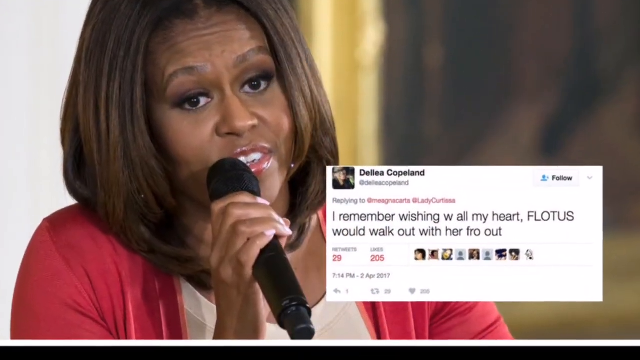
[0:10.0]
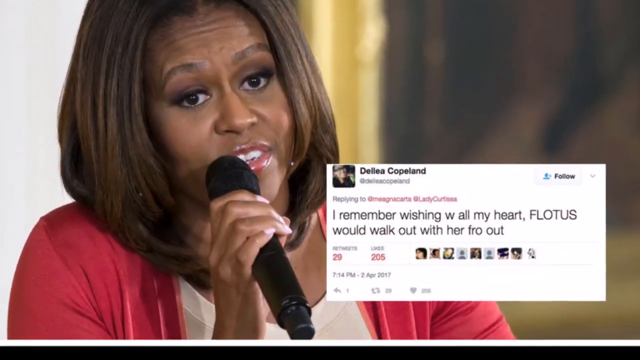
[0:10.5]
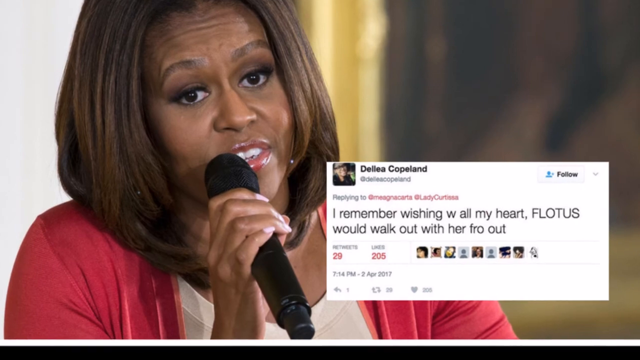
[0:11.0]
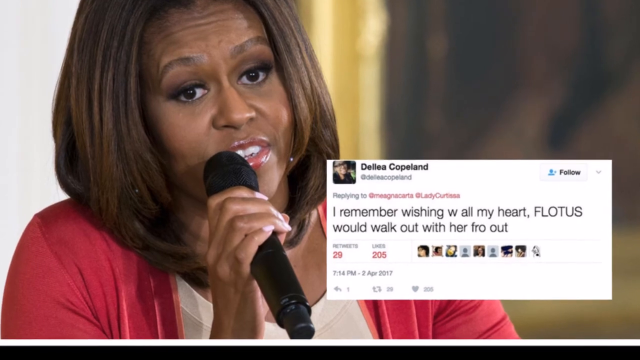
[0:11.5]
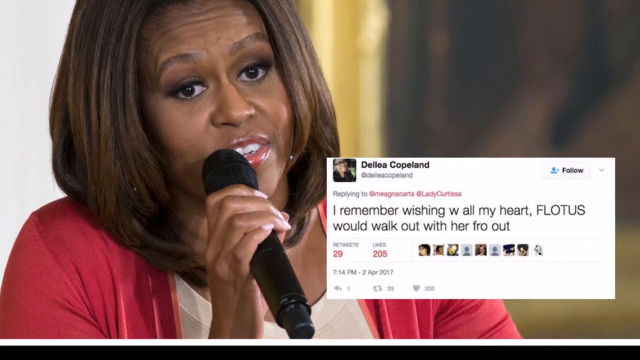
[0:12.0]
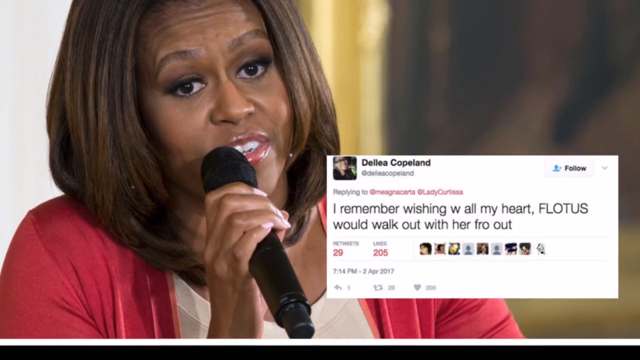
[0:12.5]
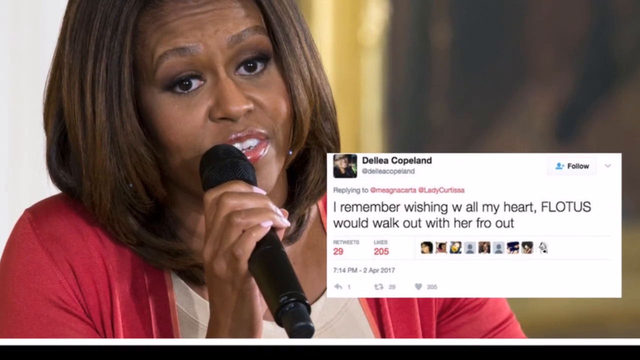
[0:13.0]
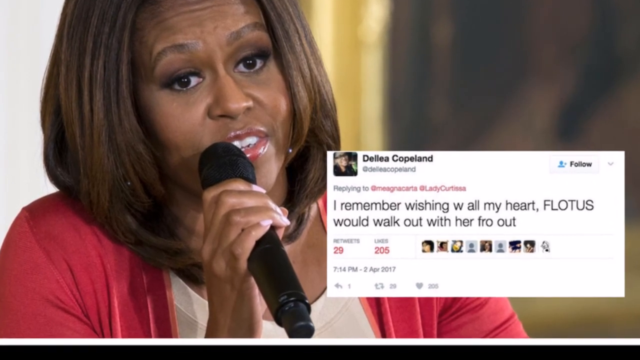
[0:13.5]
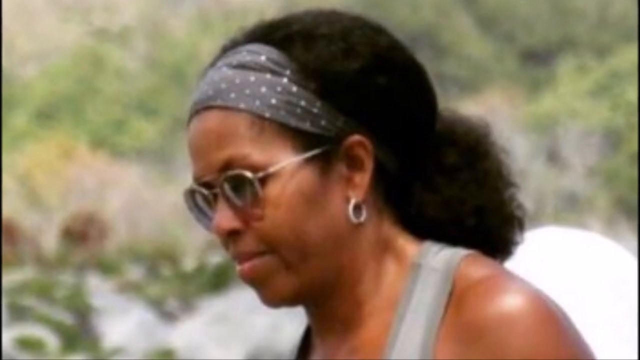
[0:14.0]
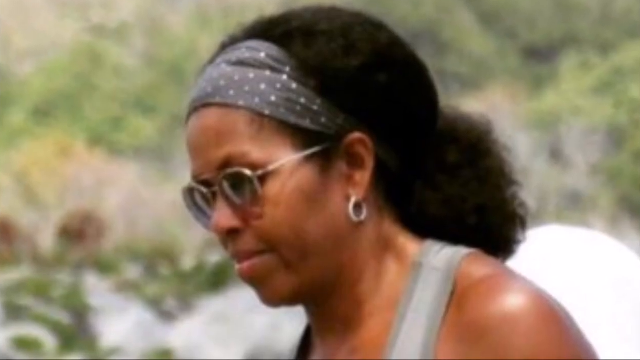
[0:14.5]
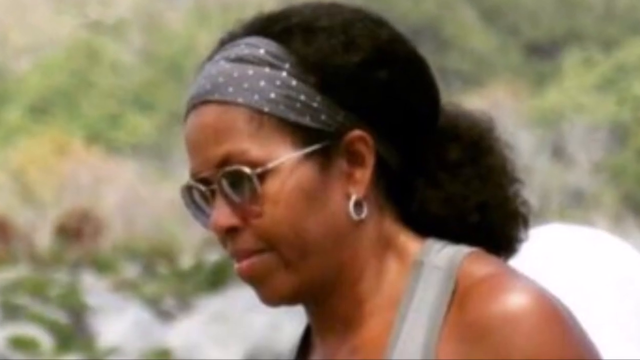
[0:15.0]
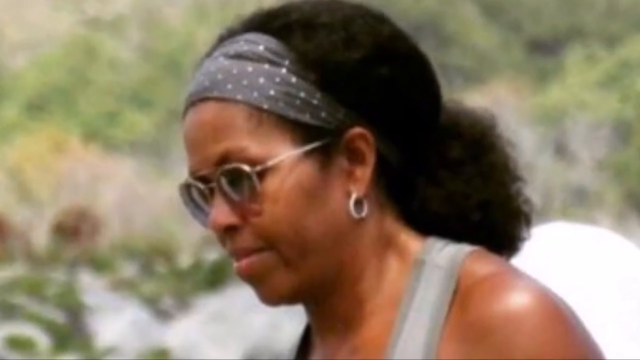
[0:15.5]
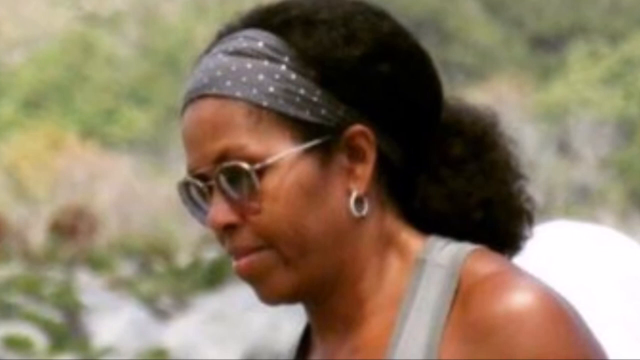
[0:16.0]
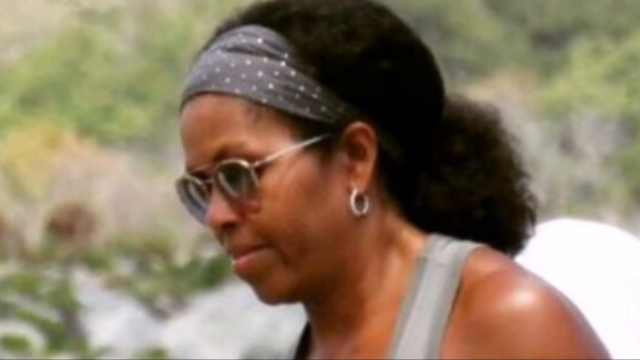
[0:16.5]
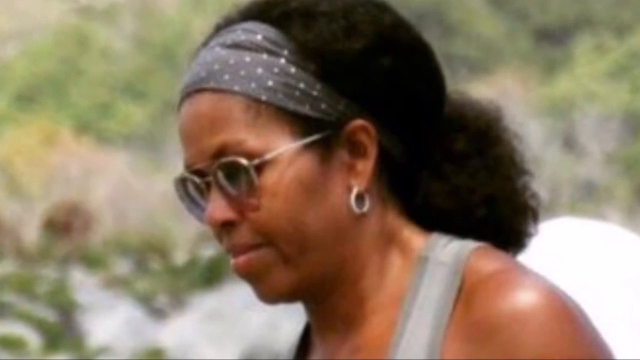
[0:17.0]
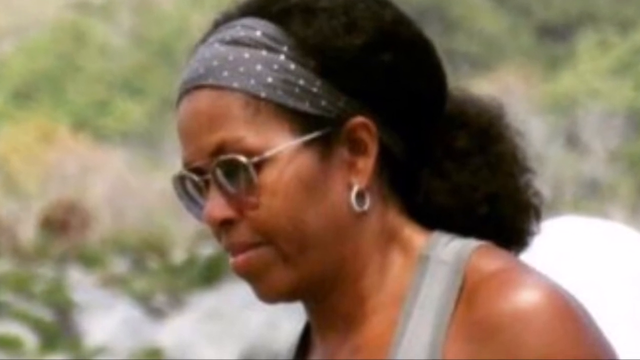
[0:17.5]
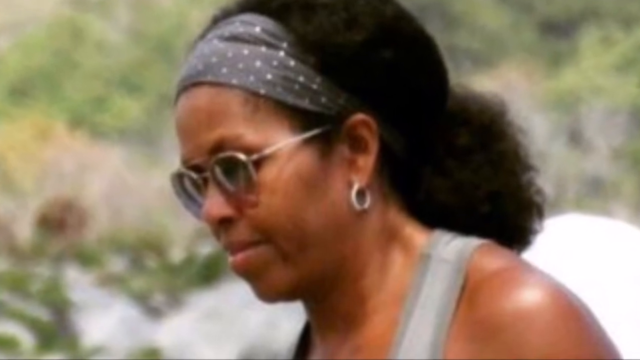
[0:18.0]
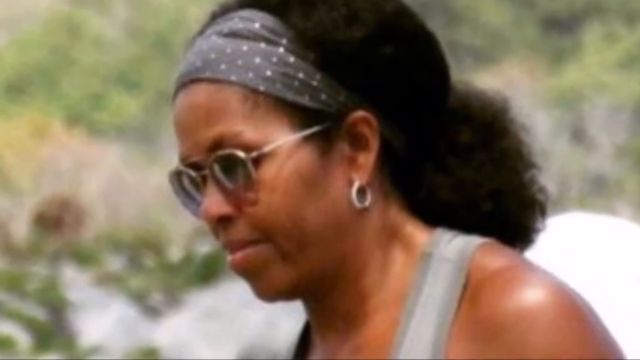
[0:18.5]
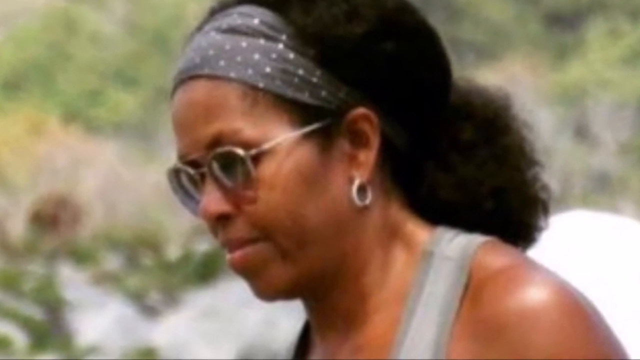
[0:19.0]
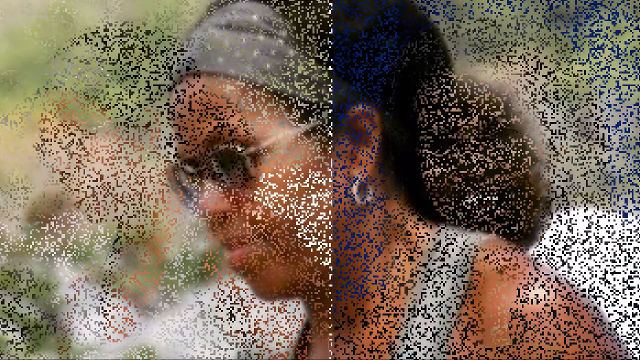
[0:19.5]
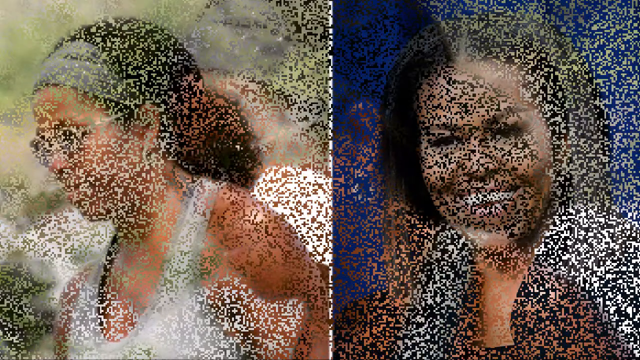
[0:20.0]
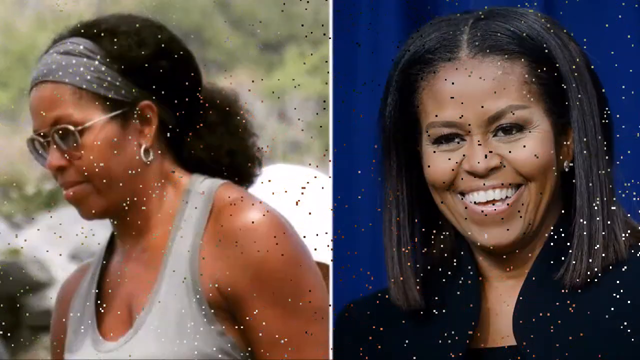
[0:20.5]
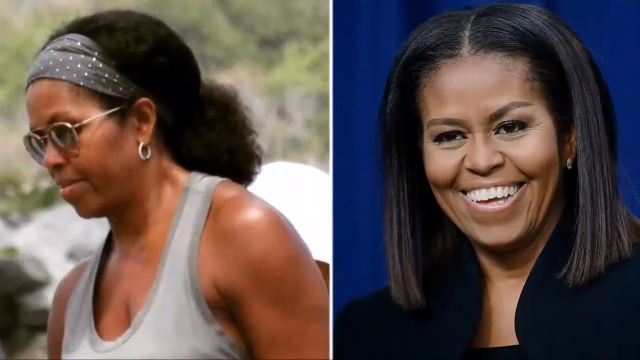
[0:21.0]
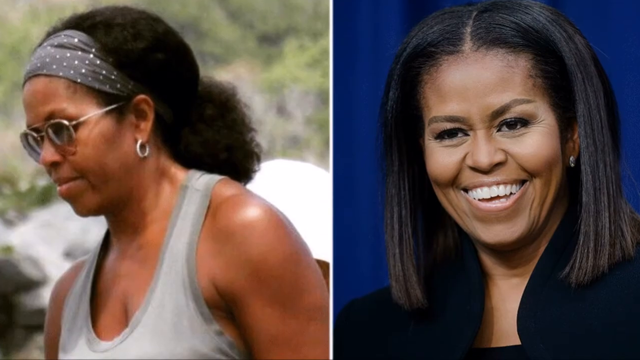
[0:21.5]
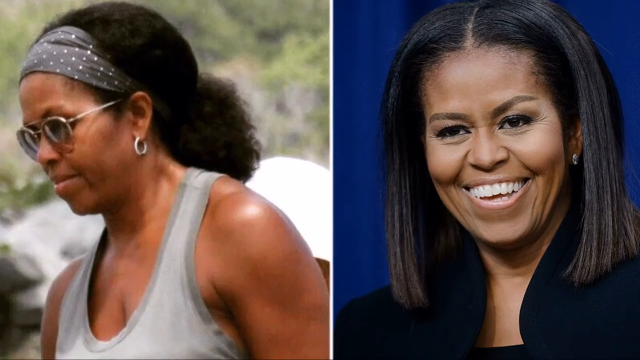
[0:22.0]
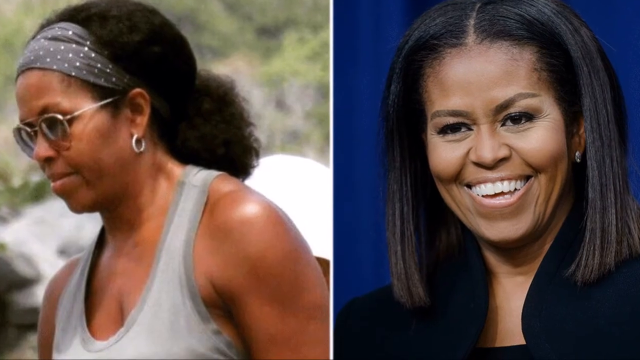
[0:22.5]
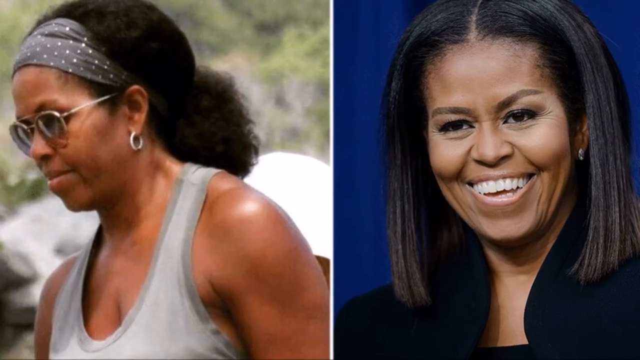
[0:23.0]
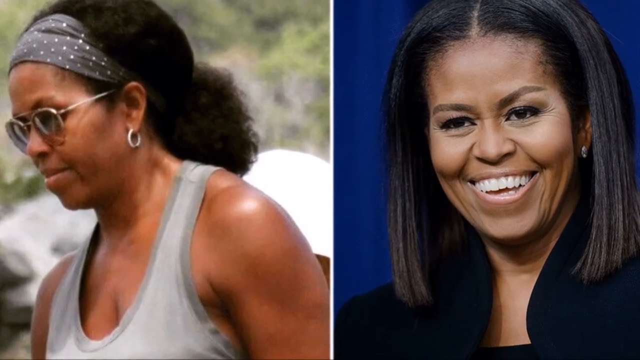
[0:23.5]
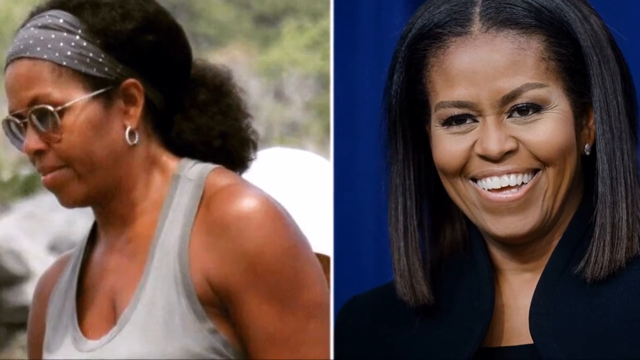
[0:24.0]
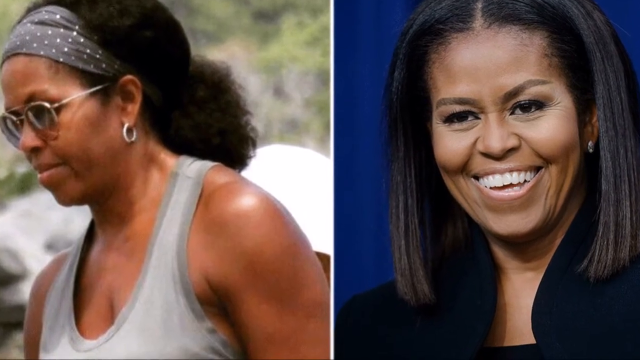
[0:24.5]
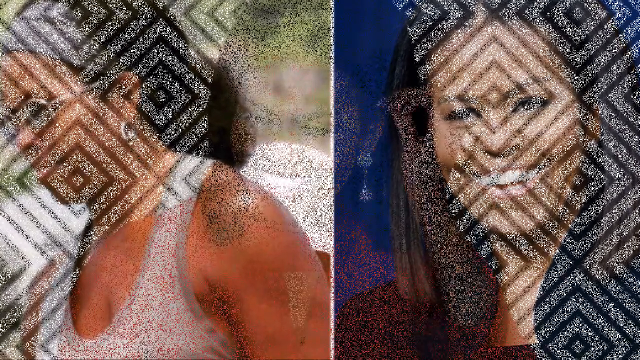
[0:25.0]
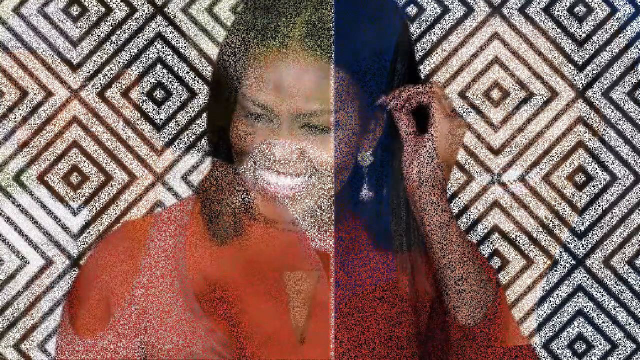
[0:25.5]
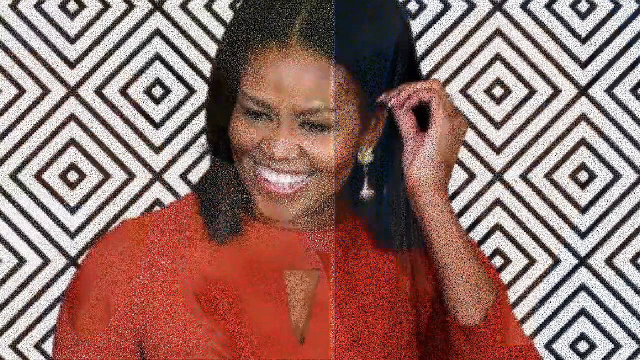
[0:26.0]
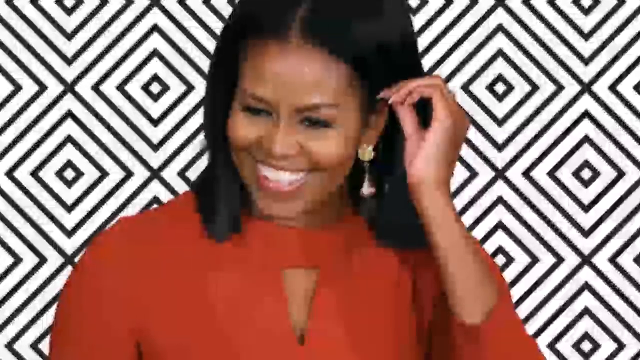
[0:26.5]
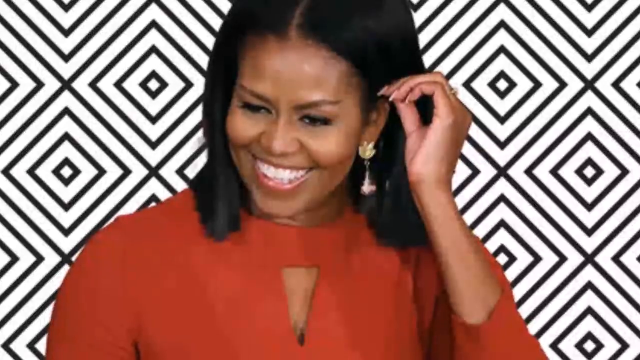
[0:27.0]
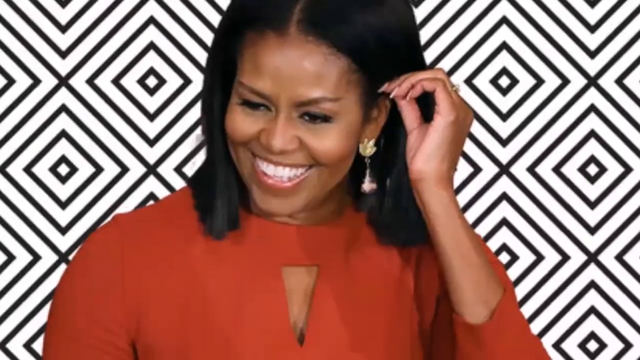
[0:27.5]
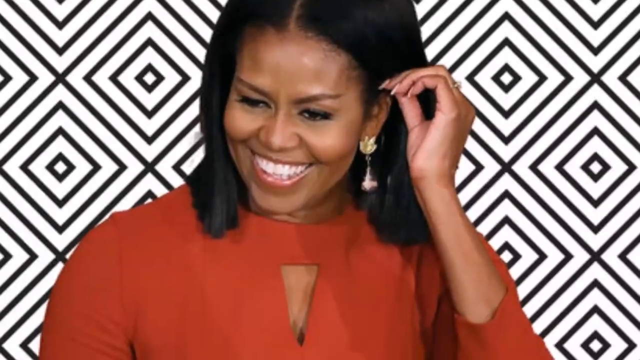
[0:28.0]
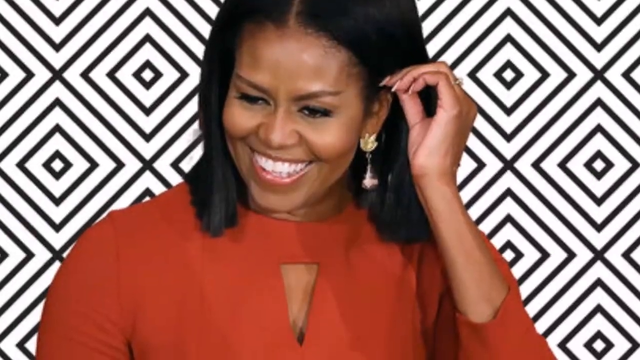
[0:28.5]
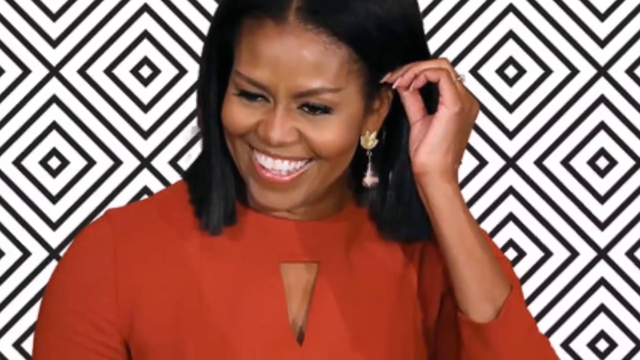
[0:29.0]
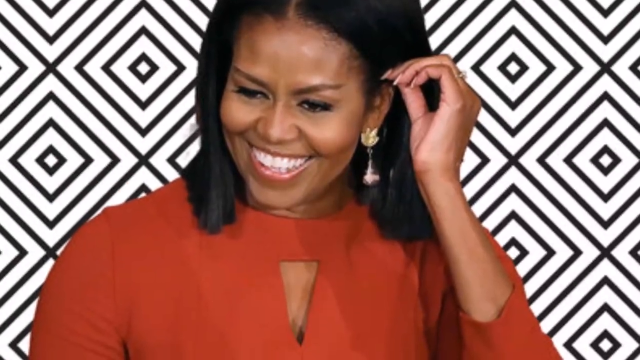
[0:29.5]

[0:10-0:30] A lady in a red jacket with a white top and a nice hairstyle holds a camera and talks. She wears lipstick that makes her lips glow, and at one point she seems disappointed. A post is shown on the screen with text reading "I remember wishing you all my heart. FLOTUS would walk out". Below the text are some small pictures and numbers such as 29 and 205. The post is by DelIle Copeland. Another picture shows a woman wearing glasses, her hair tied with a durag, and earrings on her ears. Green plants are visible in the far distance but are blurred. The video appears to zoom in and out. It then changes to two pictures: the woman with glasses, and another woman in a black jacket with black hair, smiling with all her teeth showing and seemingly closing her eyes. The last picture shows the same woman in red clothing, with small boxes painted white and black drawn on the wall in her background.